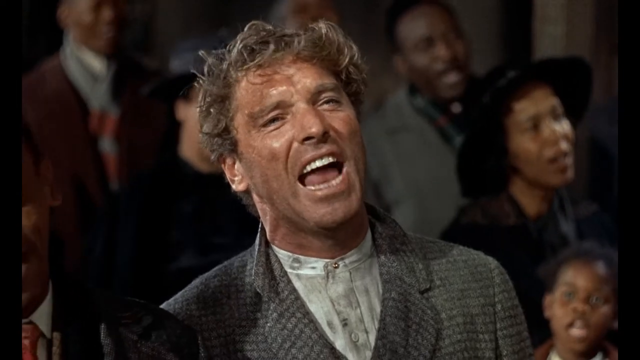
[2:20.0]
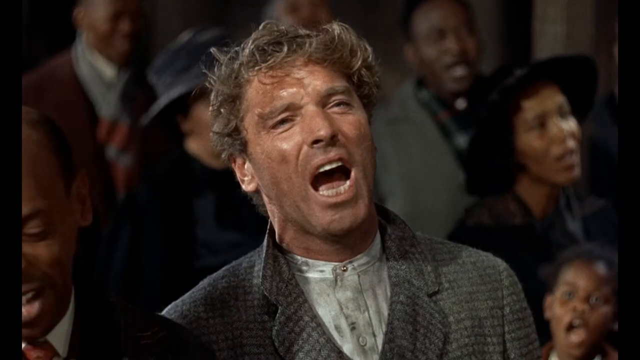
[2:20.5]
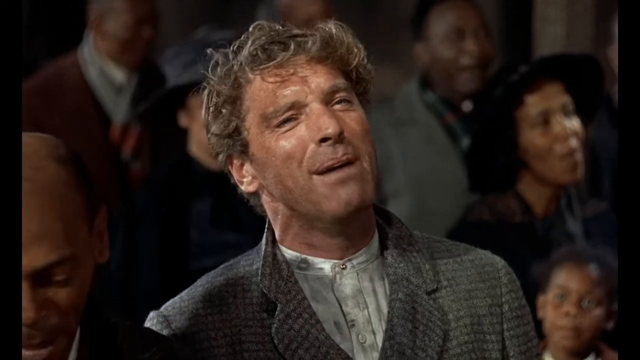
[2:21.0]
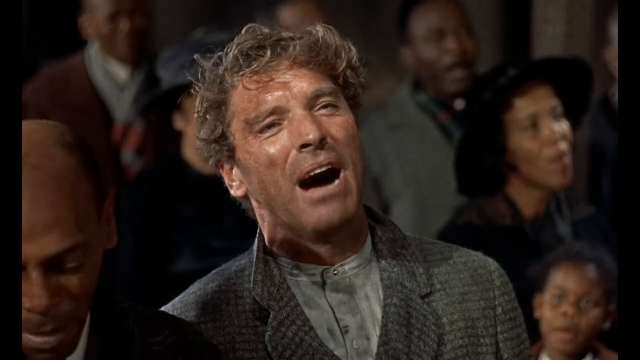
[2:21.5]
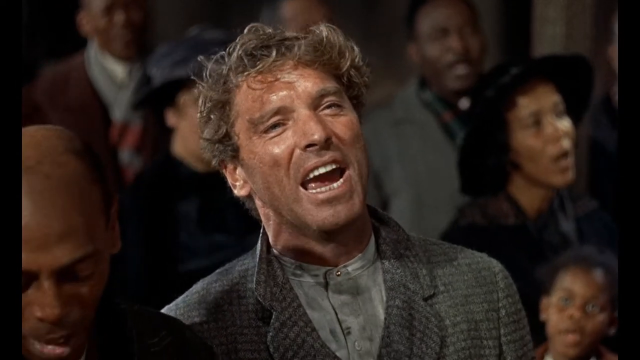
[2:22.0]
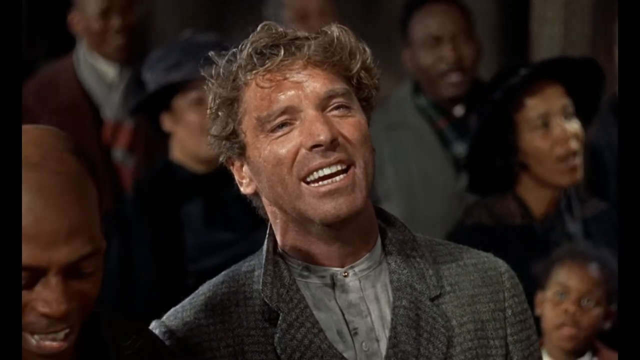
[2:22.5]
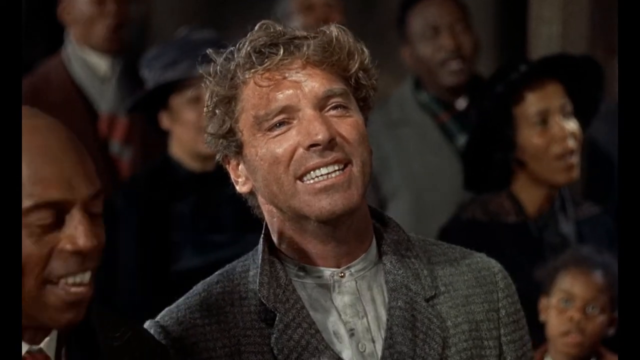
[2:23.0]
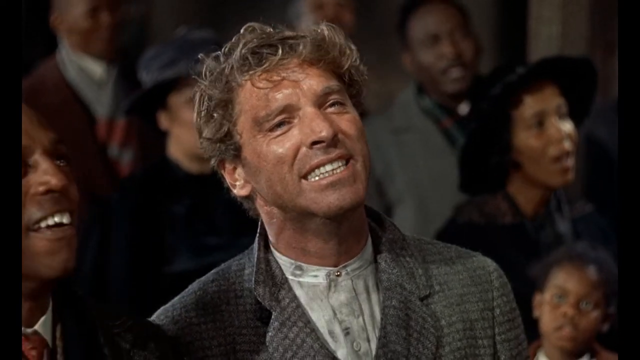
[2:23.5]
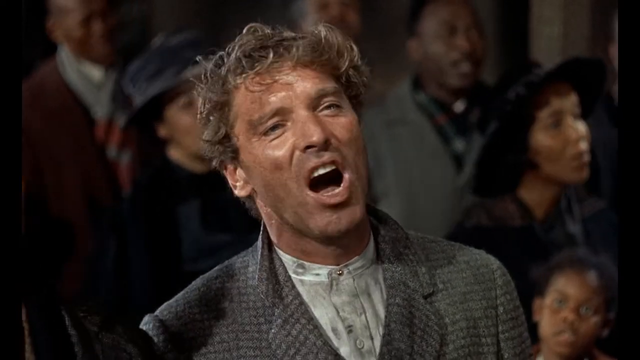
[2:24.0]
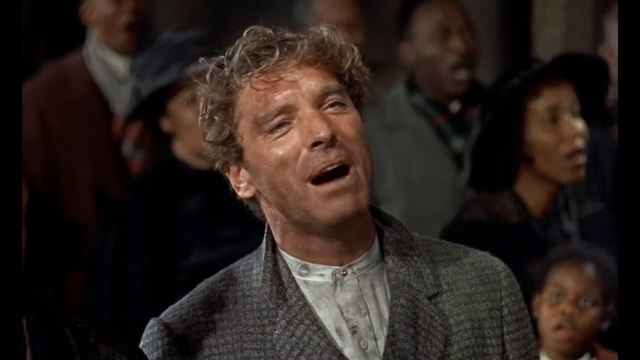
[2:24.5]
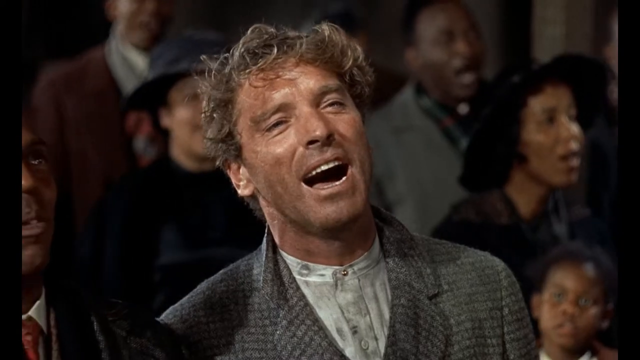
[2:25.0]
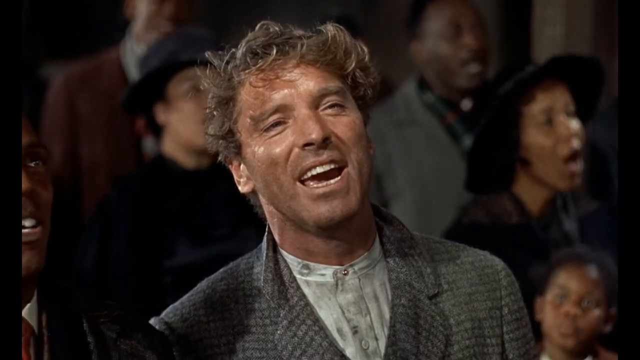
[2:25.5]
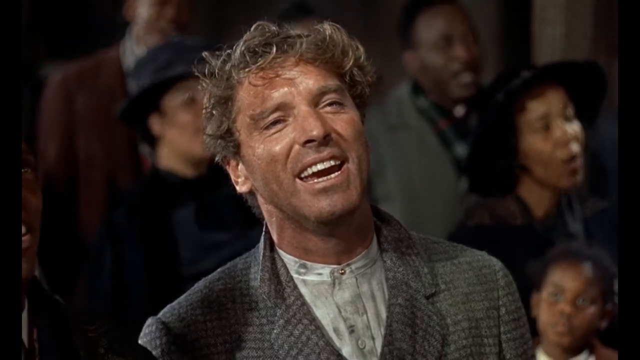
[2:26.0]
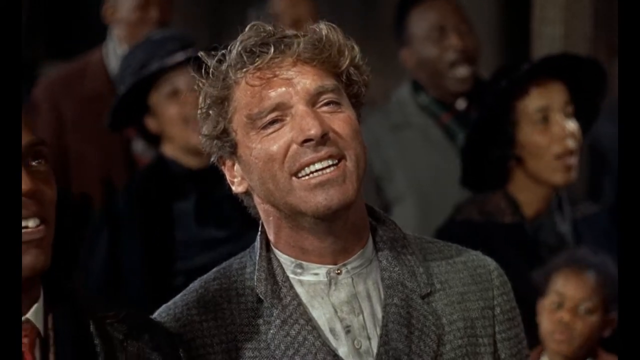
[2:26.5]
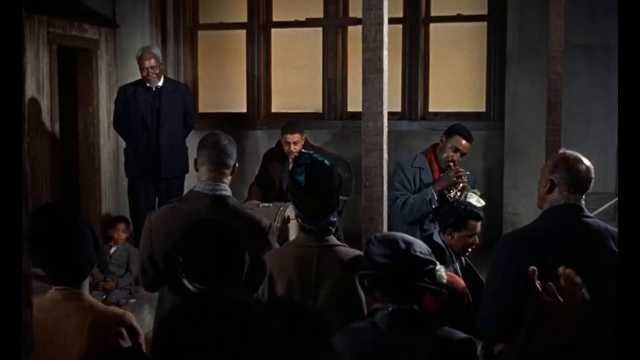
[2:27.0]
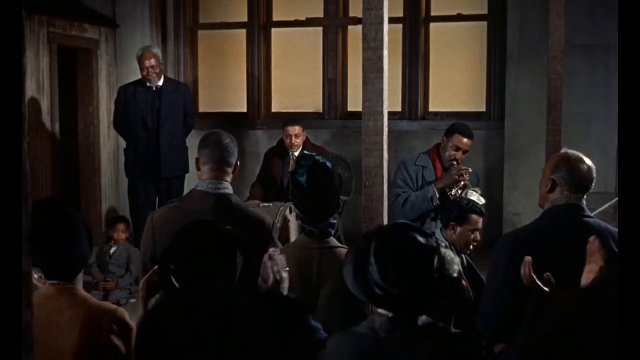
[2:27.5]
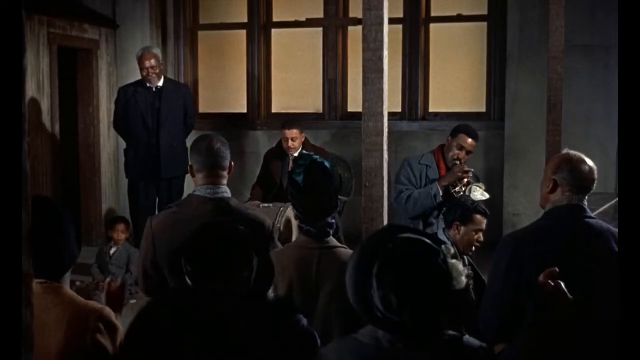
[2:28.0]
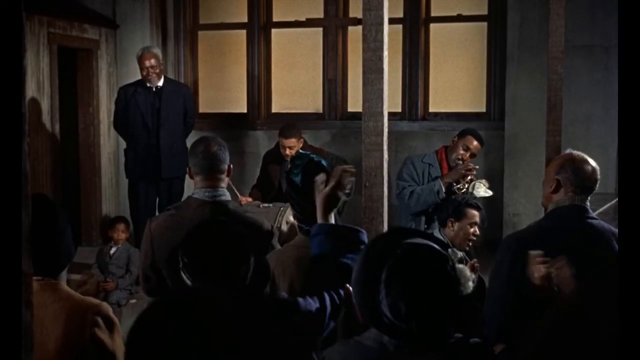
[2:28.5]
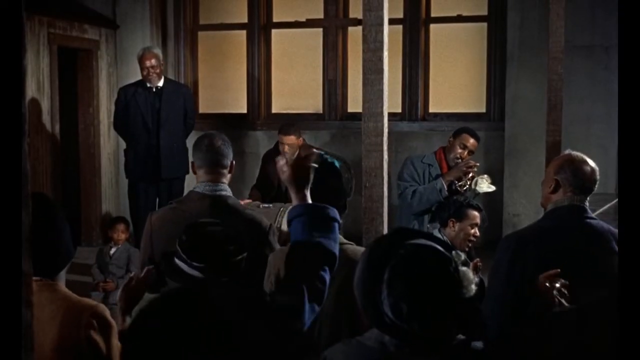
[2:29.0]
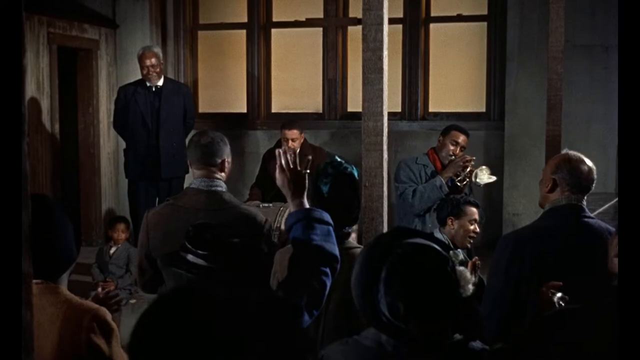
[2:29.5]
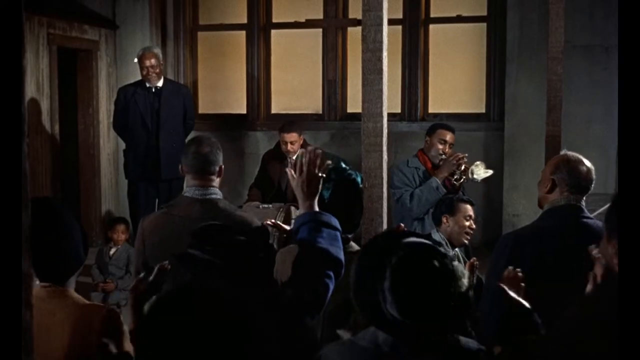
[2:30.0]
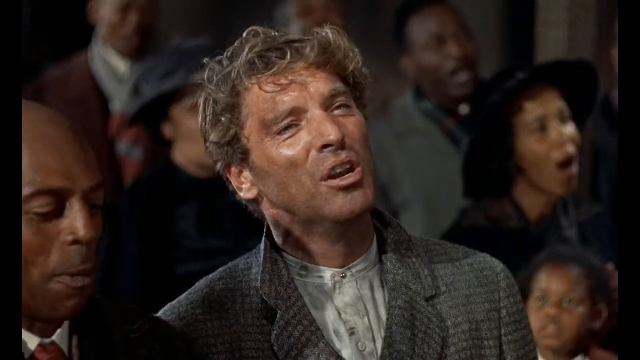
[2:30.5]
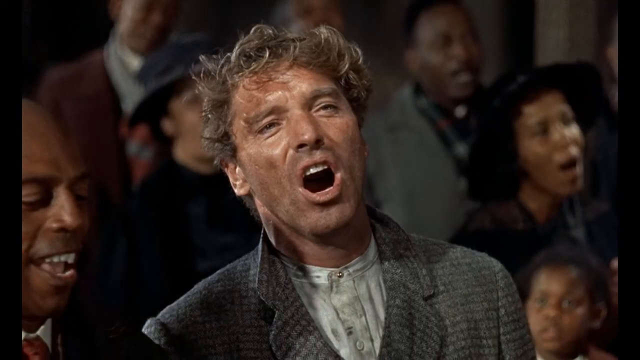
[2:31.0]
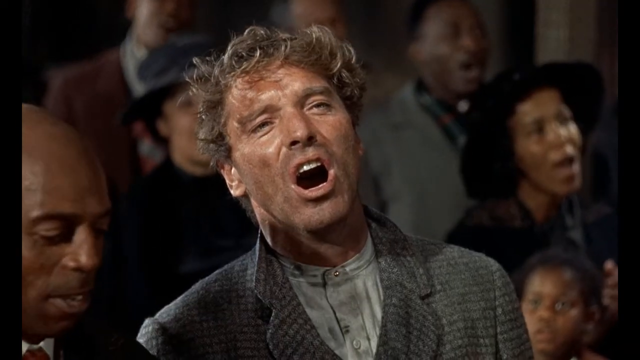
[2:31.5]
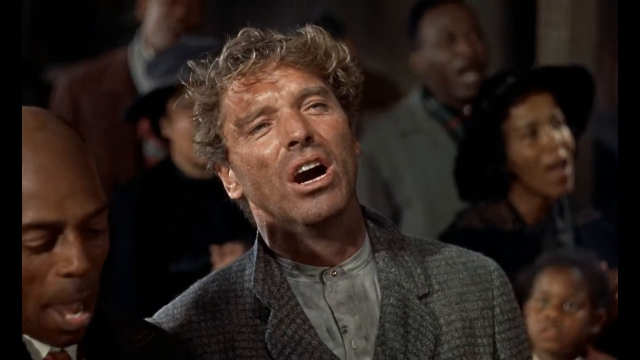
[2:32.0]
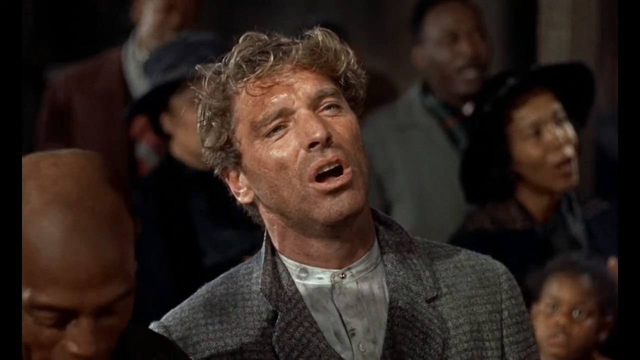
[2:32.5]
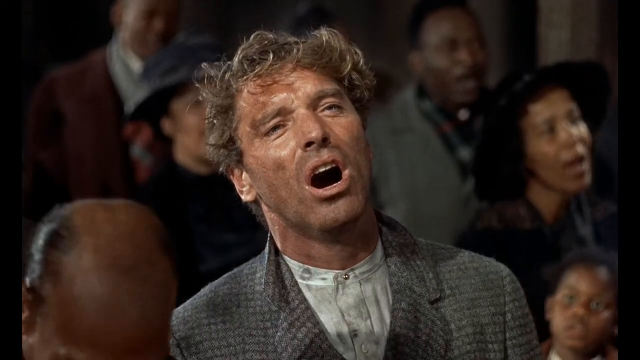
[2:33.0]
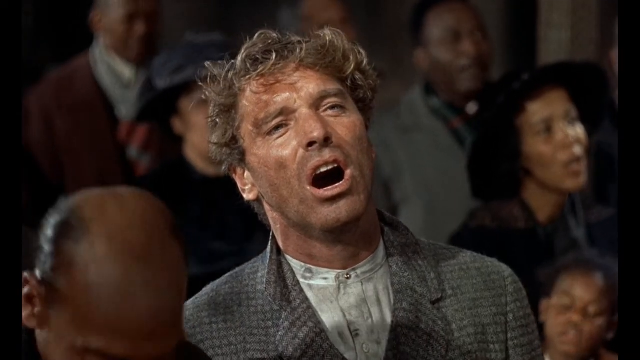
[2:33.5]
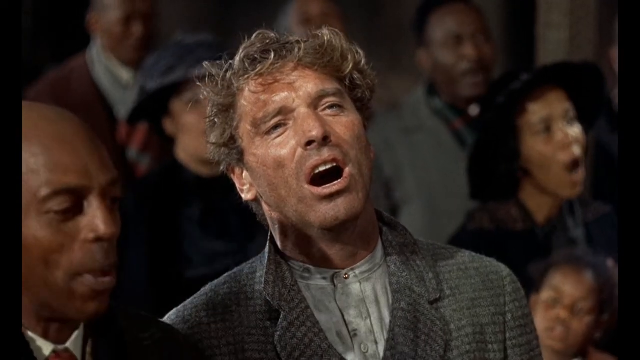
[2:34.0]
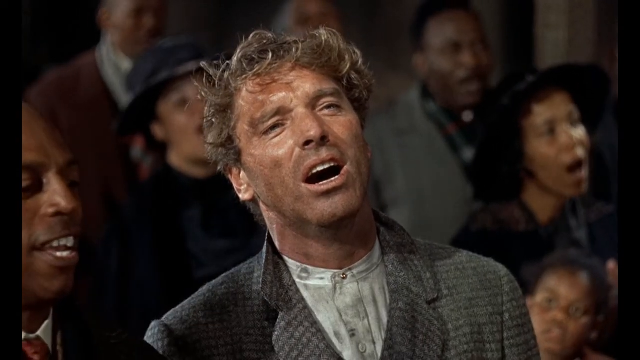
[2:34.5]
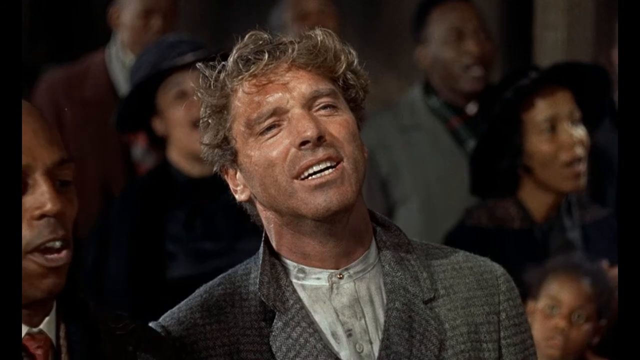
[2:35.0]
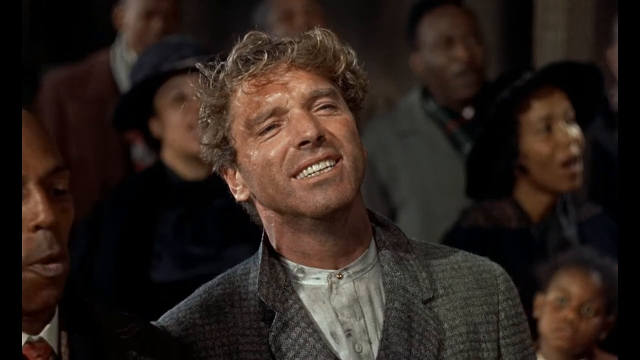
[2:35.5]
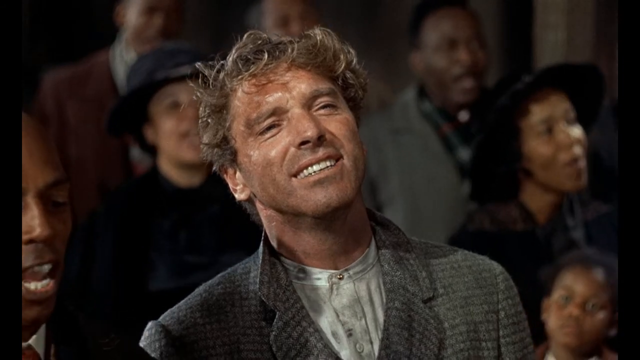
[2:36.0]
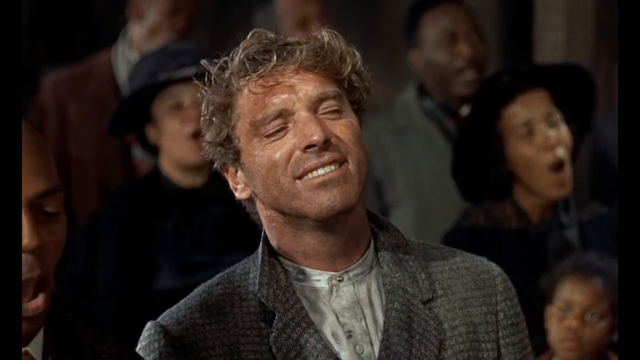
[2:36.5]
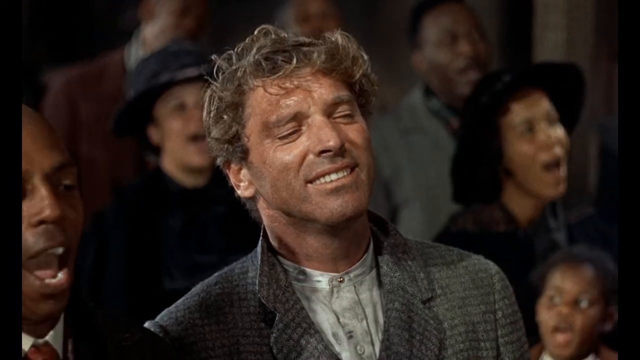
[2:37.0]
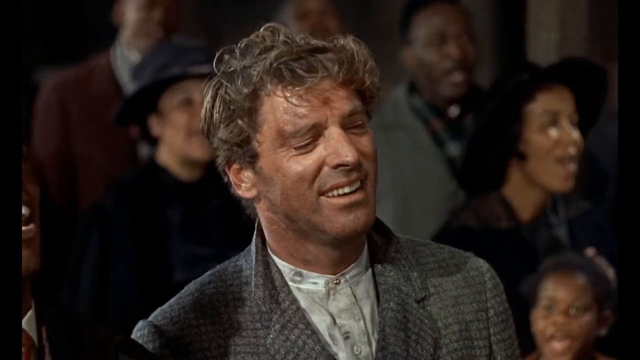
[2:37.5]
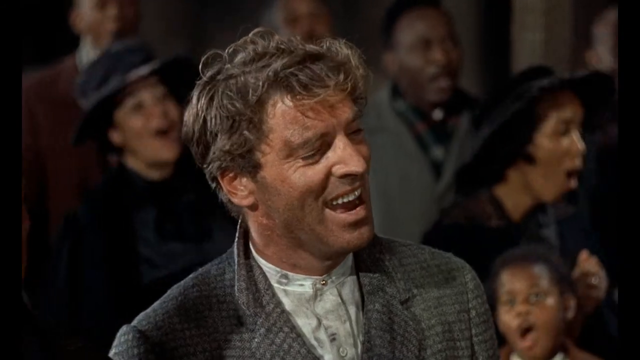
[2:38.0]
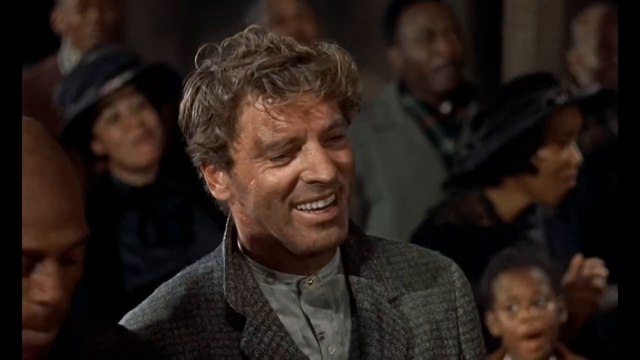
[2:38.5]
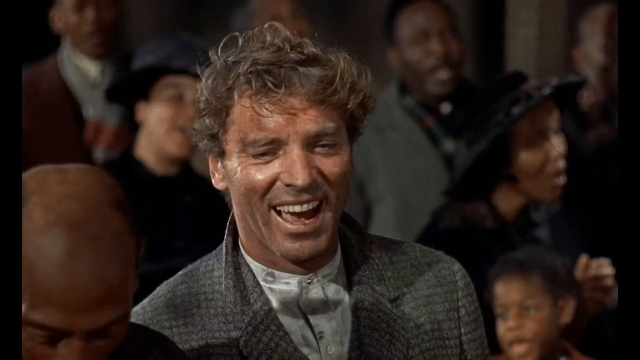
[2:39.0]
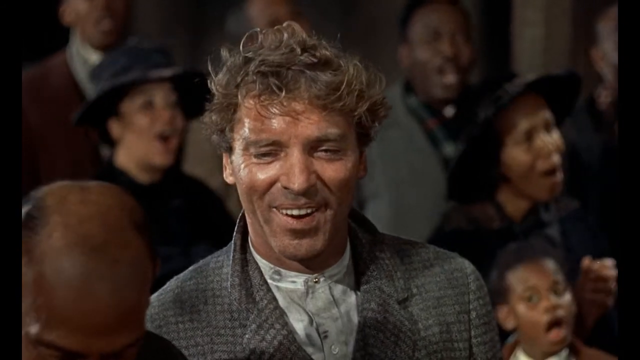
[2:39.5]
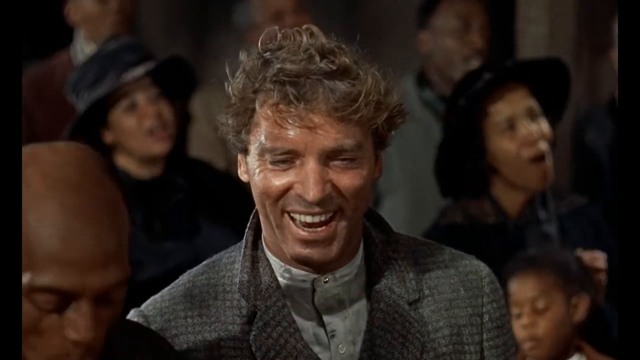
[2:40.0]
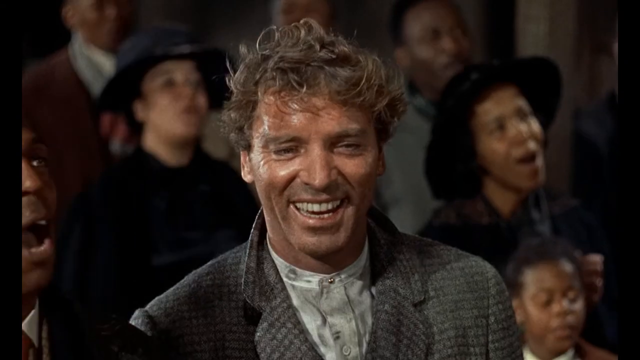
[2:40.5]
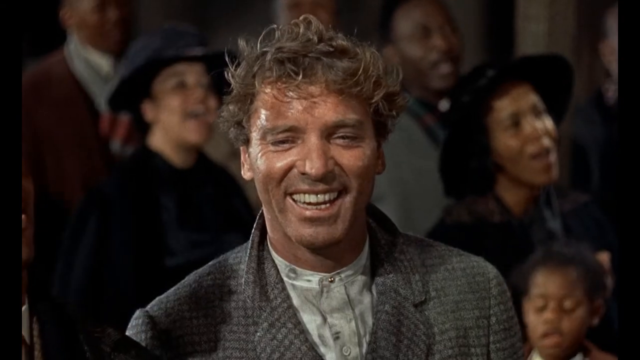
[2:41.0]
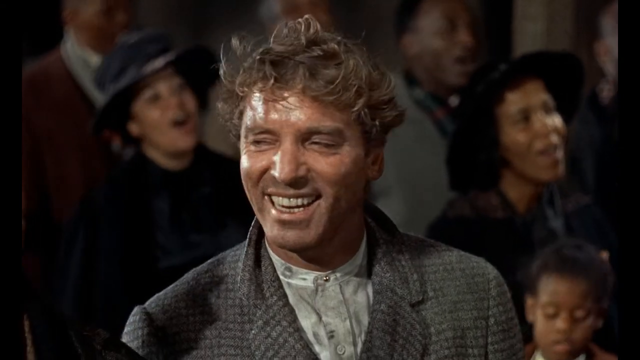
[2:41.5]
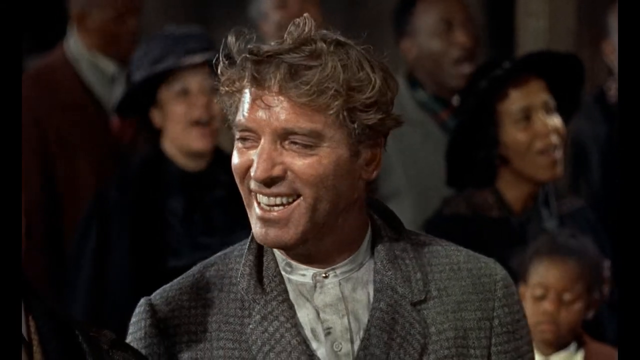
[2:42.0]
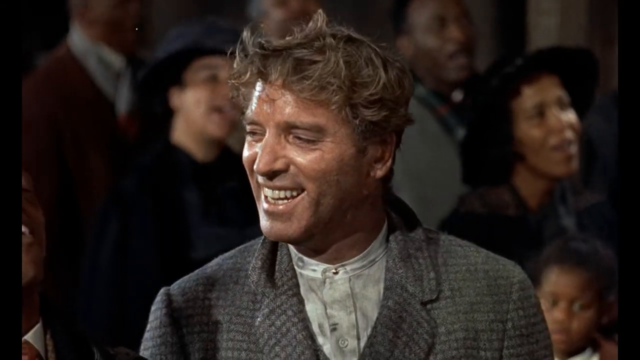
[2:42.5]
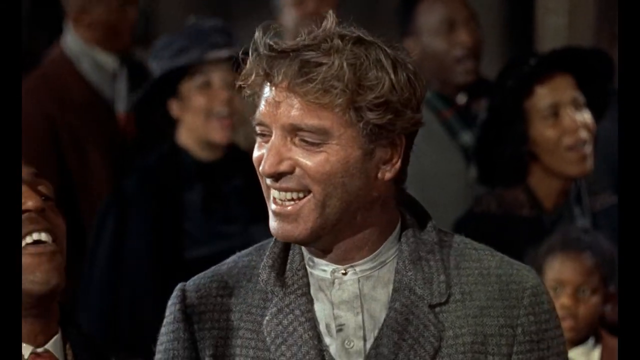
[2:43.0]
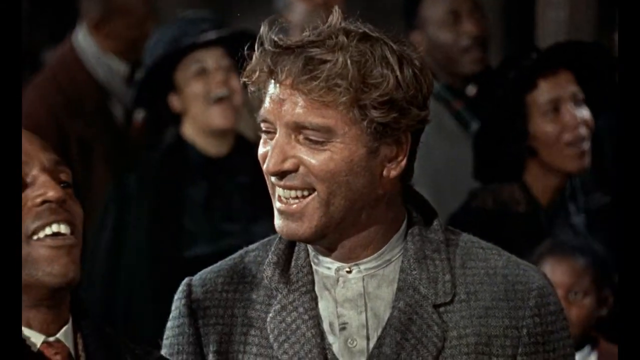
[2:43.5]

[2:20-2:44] Everyone continues to sing, and the man sings with them. A person standing on stage looks at the white man in awe, smiling, almost as if proud of him. The man continues singing, then stops for a second while smiling and looking around at the people, seeming to feel good. He looks at the man next to him and looks happy, seemingly trying to blend in with everybody else.